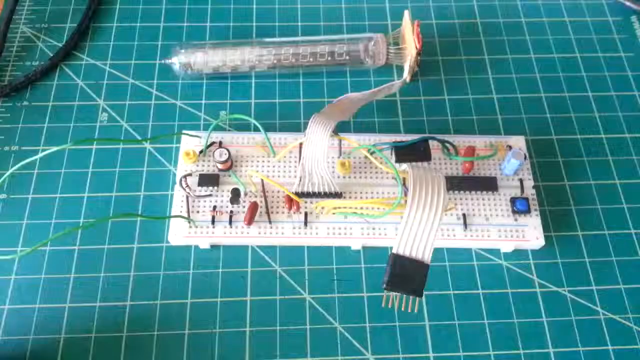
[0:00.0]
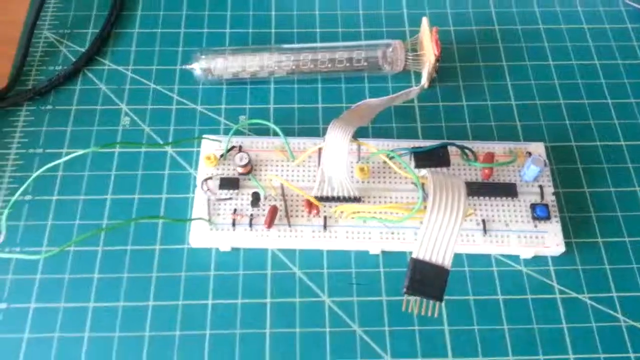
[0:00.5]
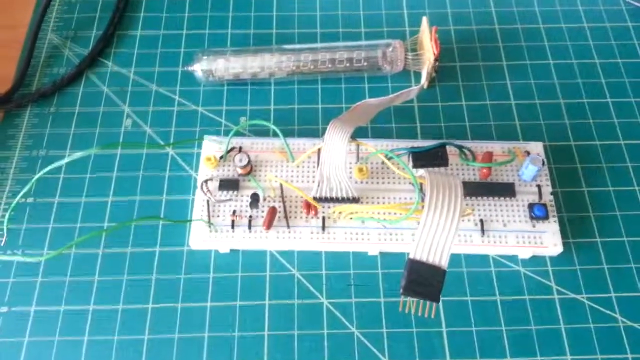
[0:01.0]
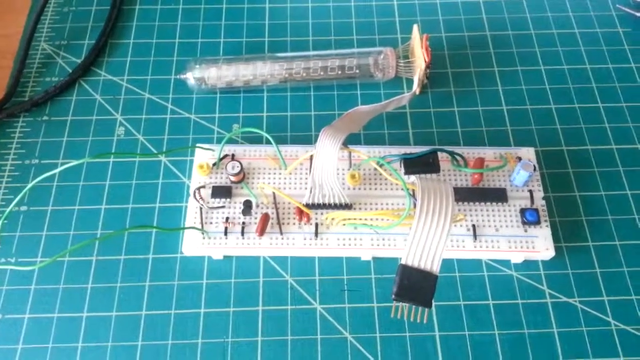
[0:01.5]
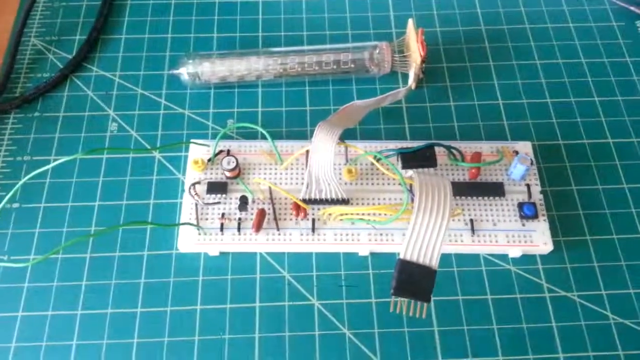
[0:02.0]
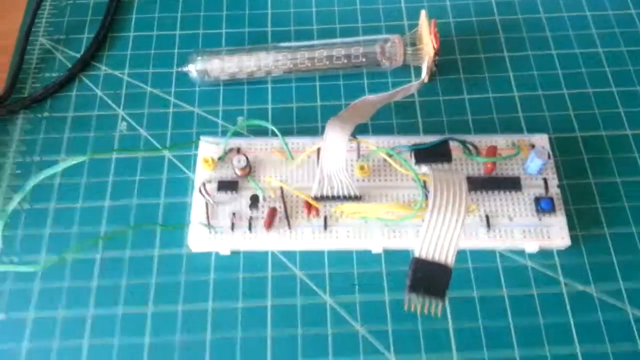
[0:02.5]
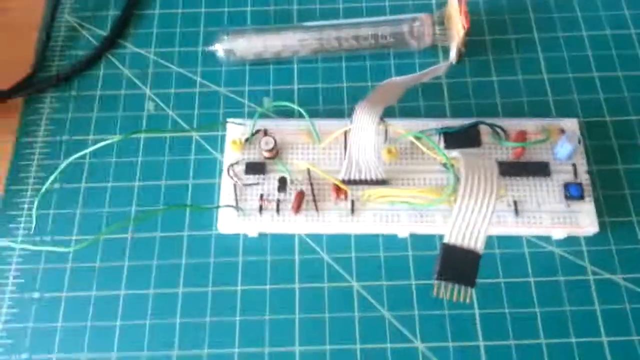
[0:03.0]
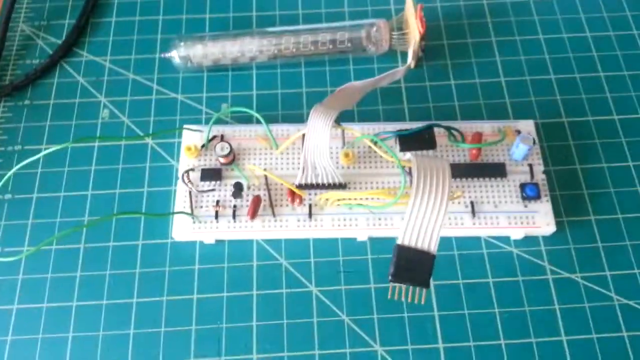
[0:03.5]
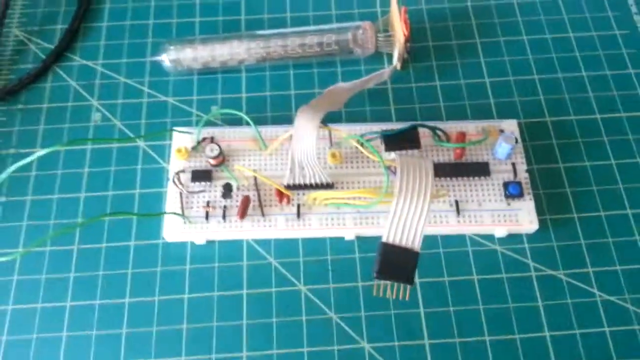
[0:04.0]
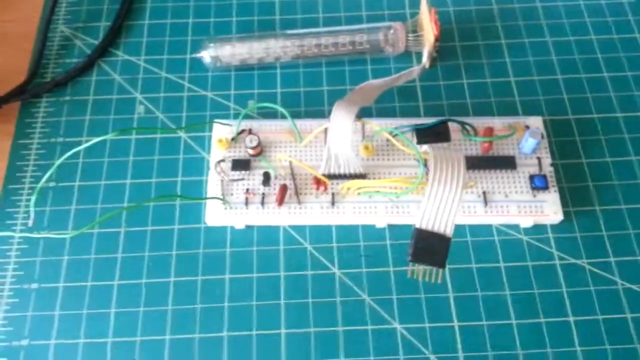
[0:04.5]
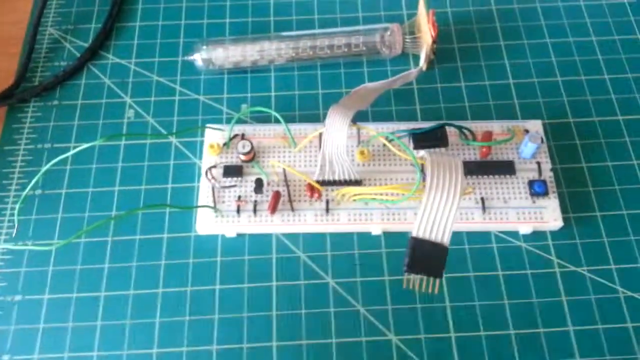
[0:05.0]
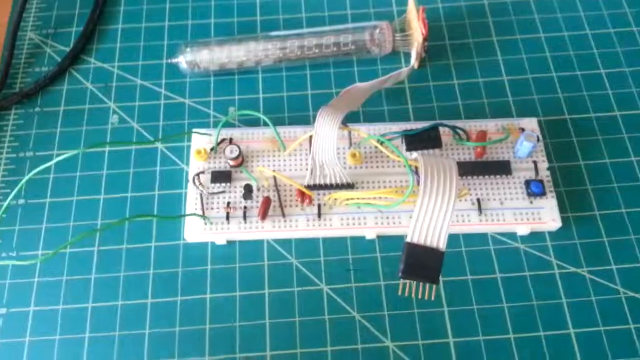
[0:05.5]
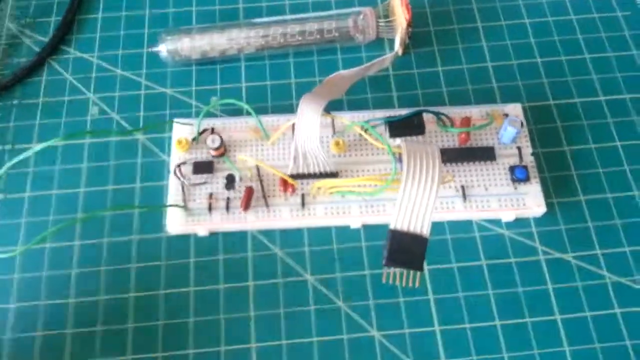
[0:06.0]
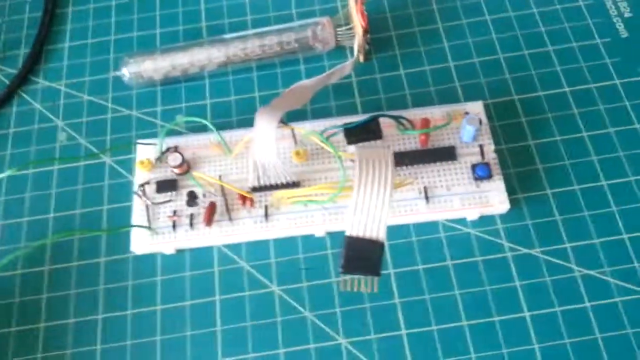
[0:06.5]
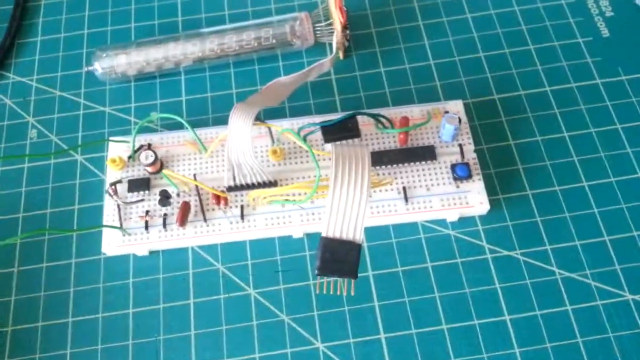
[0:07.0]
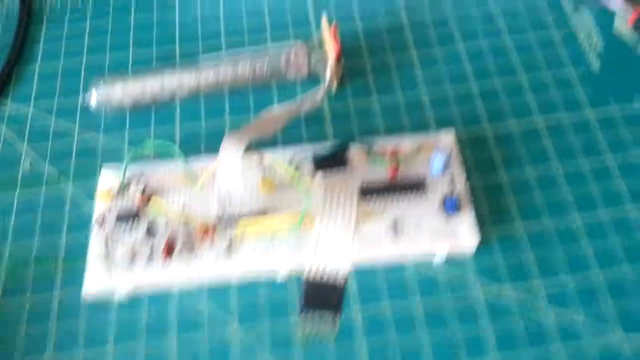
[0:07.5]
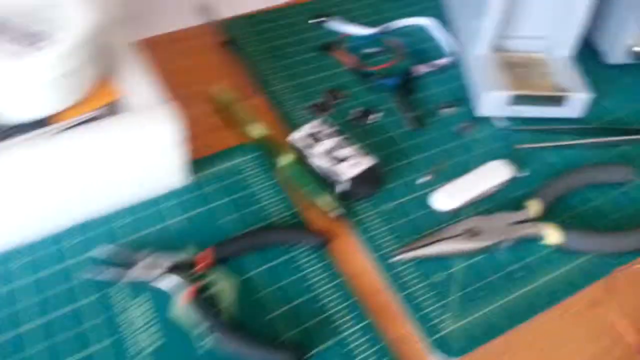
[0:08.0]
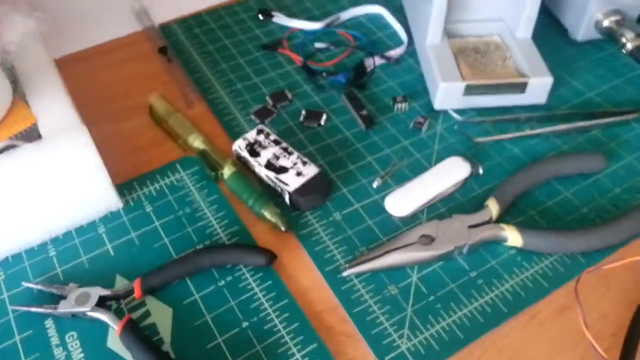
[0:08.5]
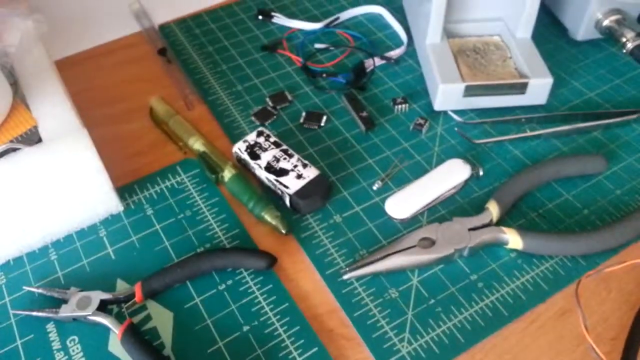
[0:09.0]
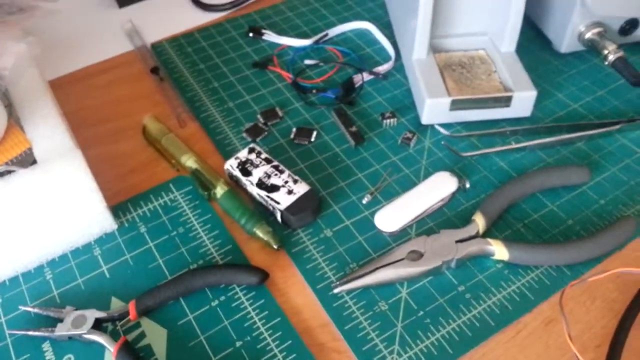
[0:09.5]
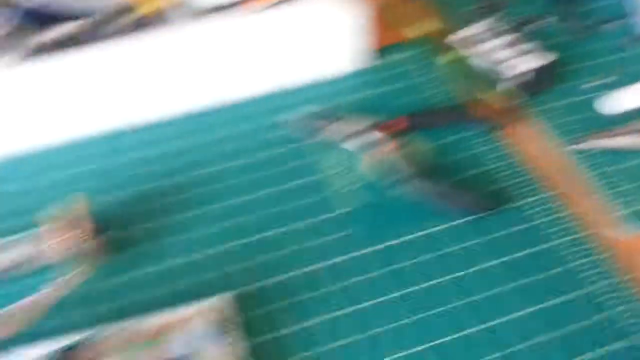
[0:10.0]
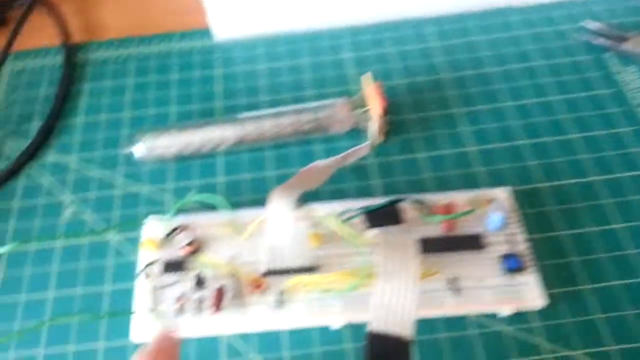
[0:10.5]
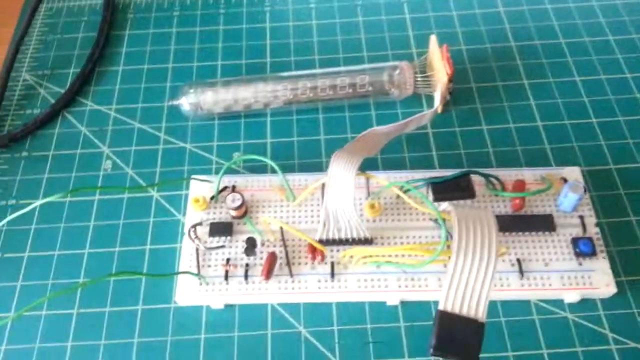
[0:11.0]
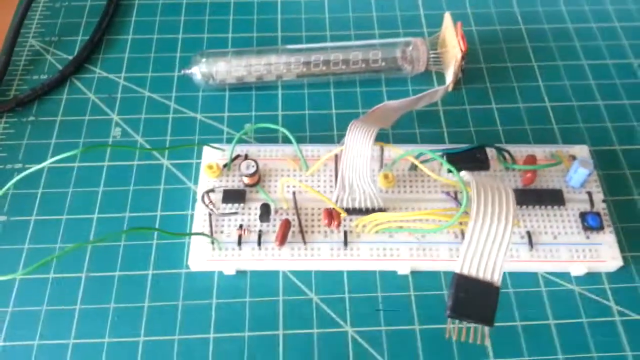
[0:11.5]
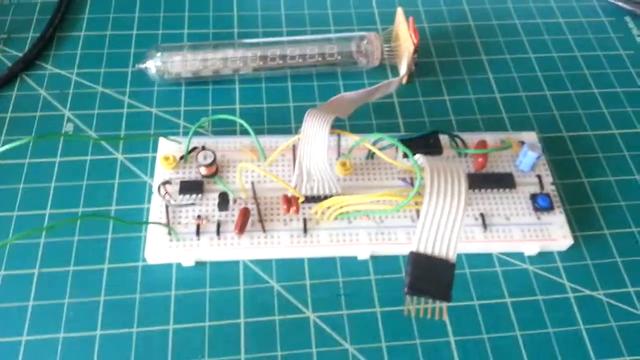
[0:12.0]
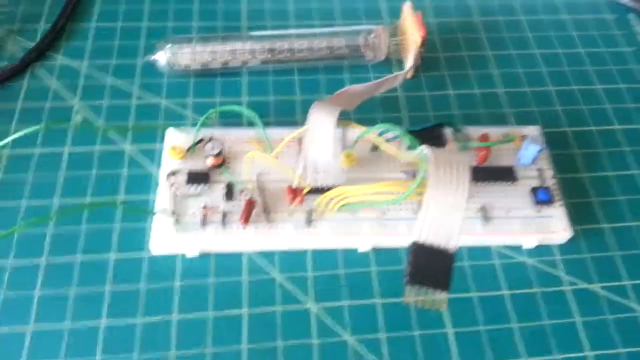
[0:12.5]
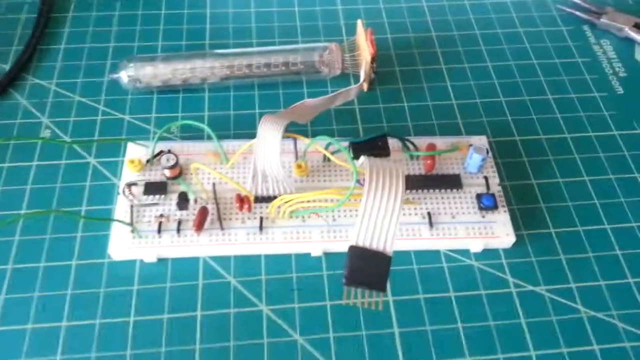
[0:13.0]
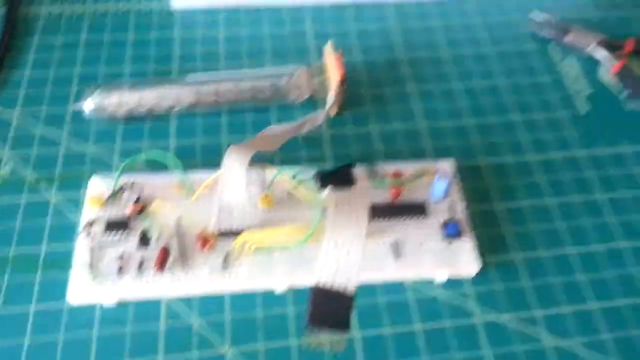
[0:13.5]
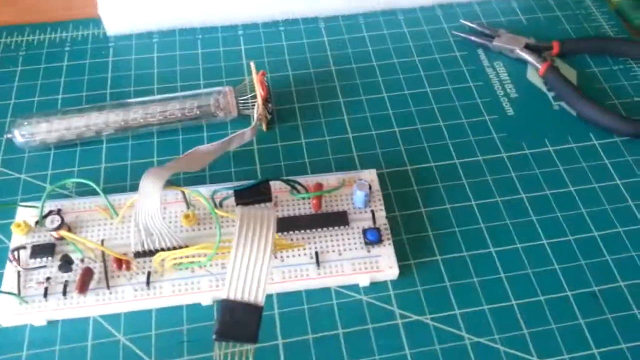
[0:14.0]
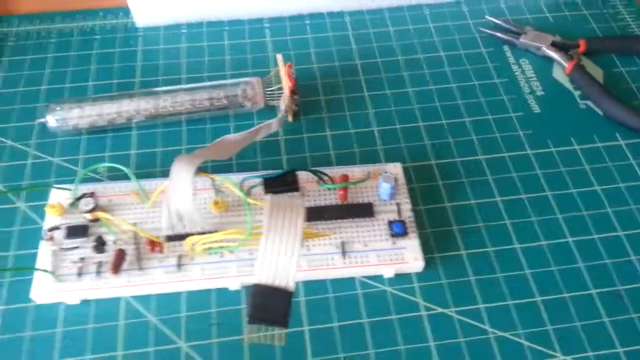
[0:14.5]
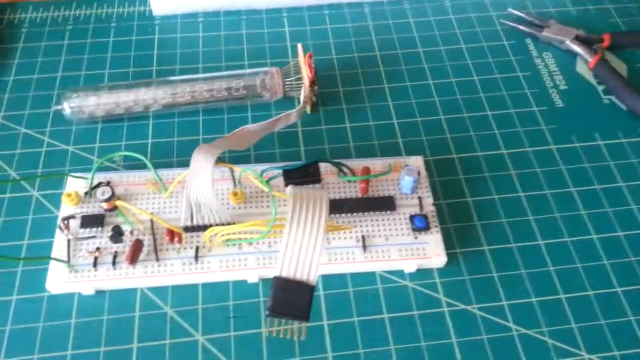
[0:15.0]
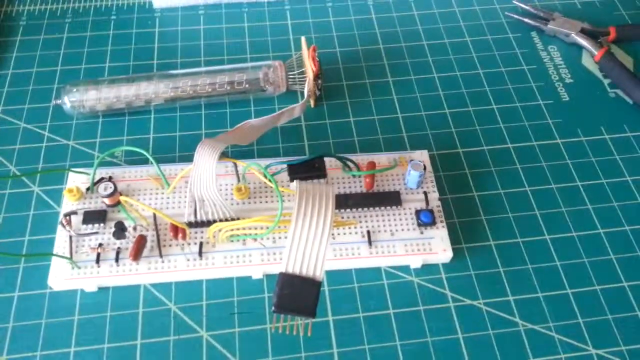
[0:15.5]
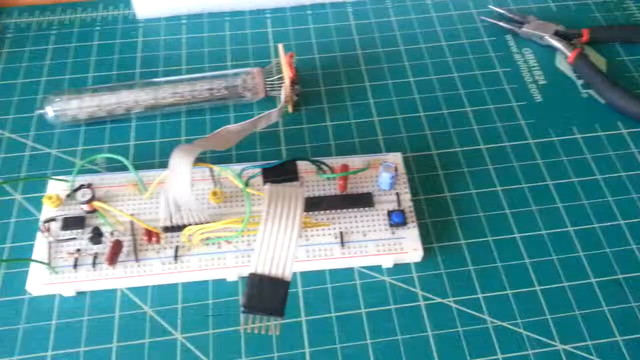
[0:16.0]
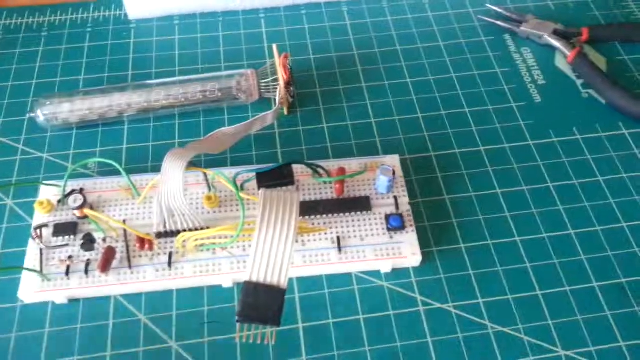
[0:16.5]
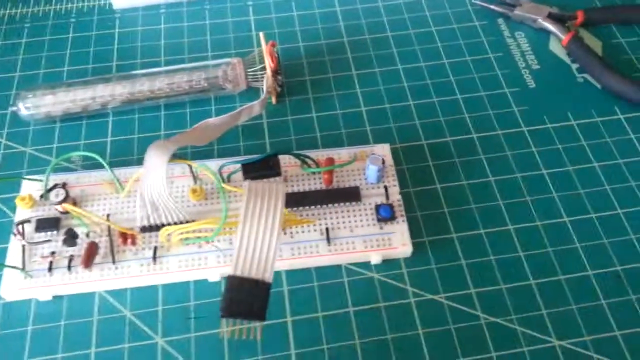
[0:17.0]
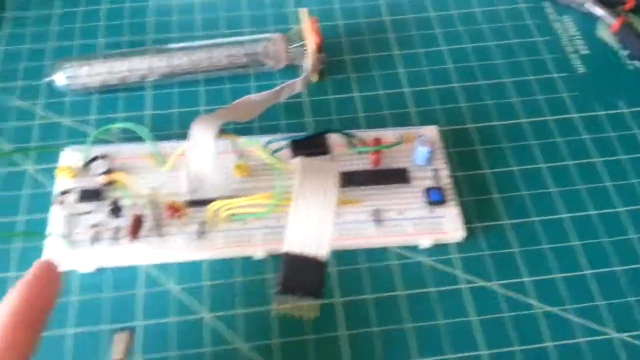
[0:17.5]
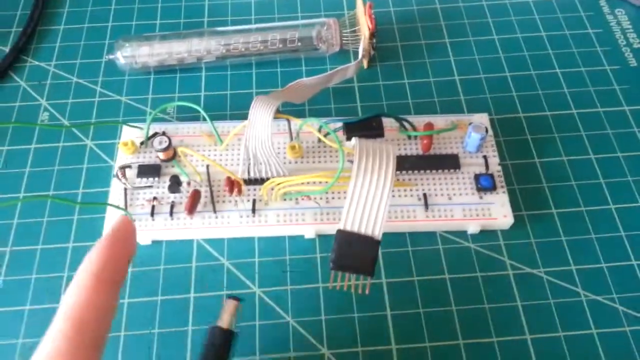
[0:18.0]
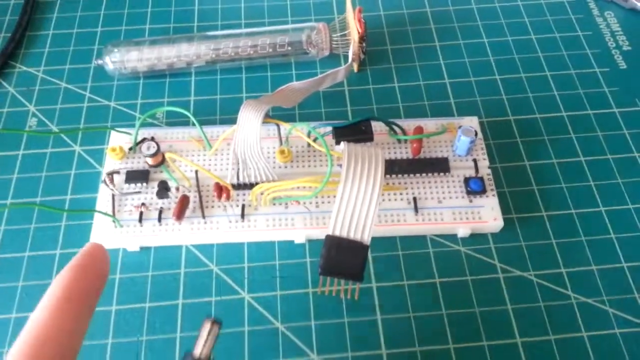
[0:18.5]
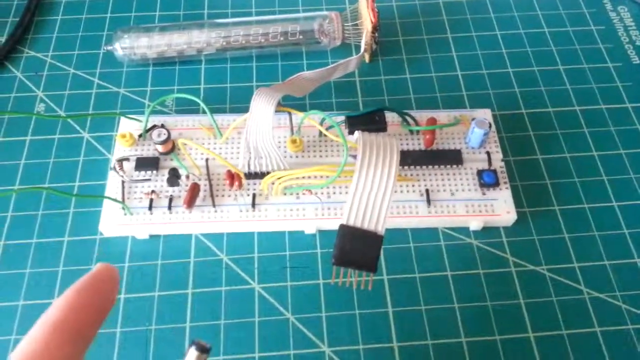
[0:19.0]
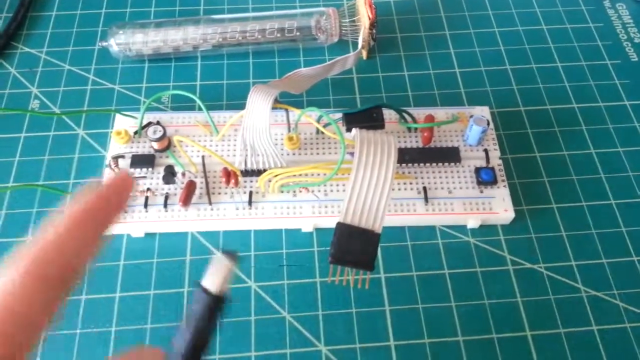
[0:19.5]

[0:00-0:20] An Arduino-type chip for learning about electronics is set up on a work table of an electrician, an engineer, or a specialized student in the field, in a relatively complex configuration. Several cables are connected to both the ground and the current, and two thick, wide white cables stand out; one of them is connected to what appears to be a carrot full of LEDs inside. Midway through, the user moves the camera to his right to show other tools next to him: two tweezers for cutting cables, several scattered transistors, a strange-looking pen that looks very big, possibly because of the angle and the closeness of the camera, and a rectangle whose function is unclear.